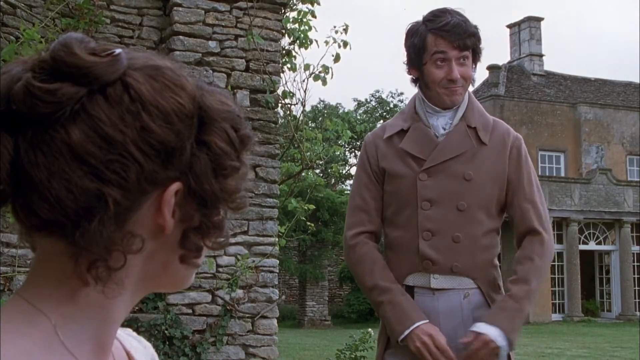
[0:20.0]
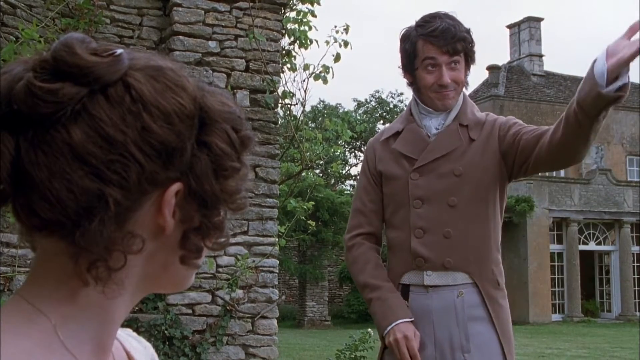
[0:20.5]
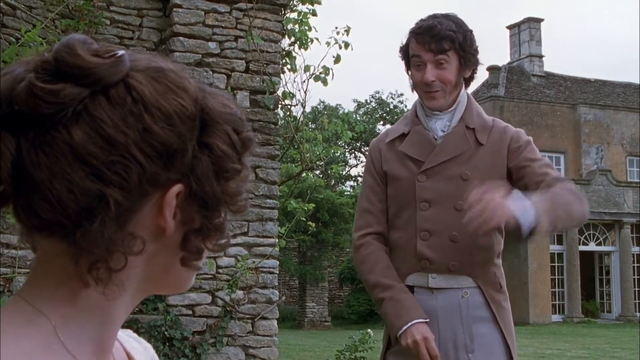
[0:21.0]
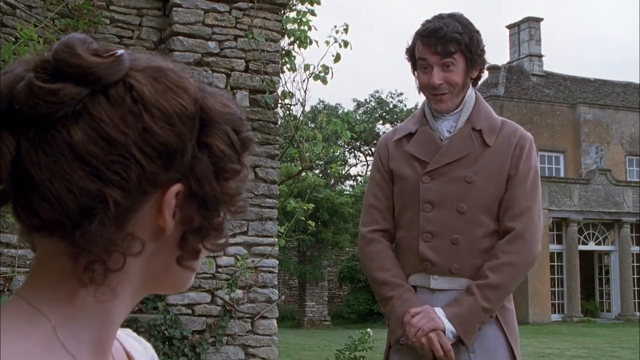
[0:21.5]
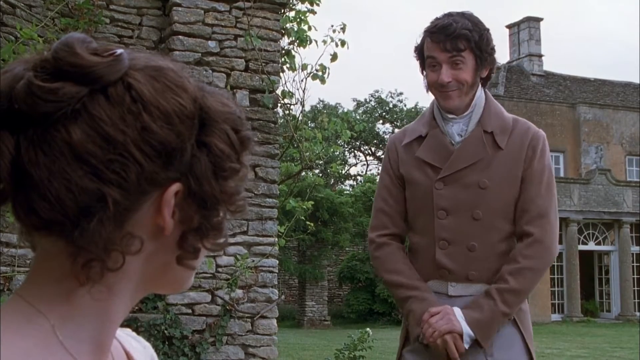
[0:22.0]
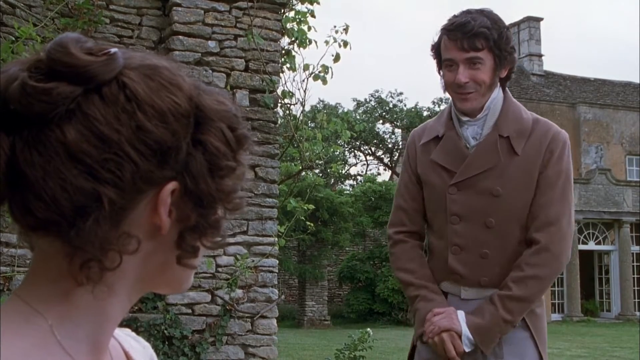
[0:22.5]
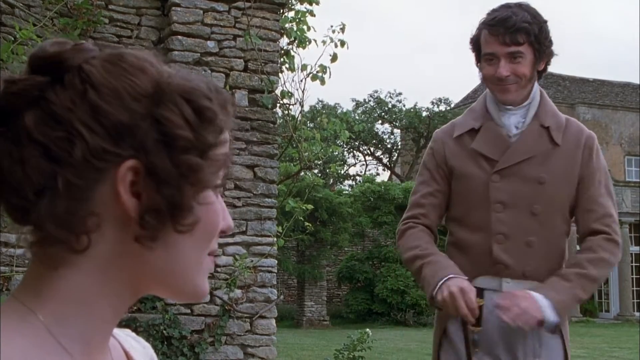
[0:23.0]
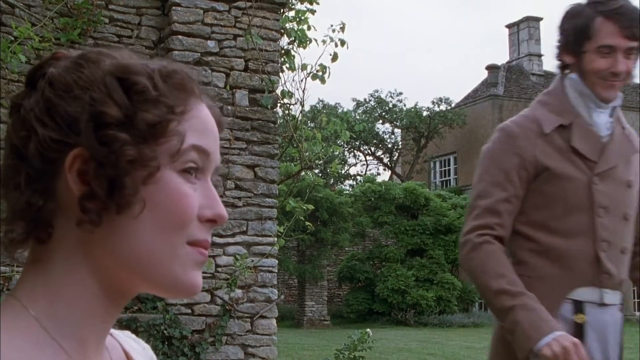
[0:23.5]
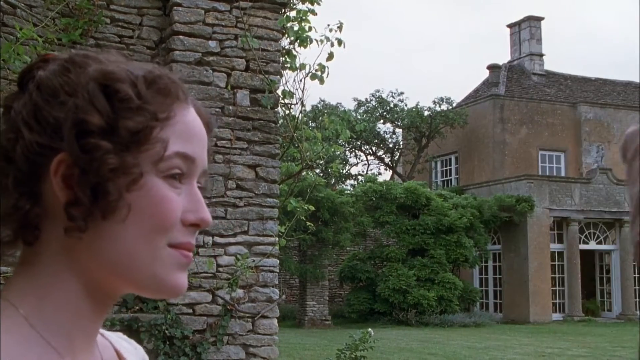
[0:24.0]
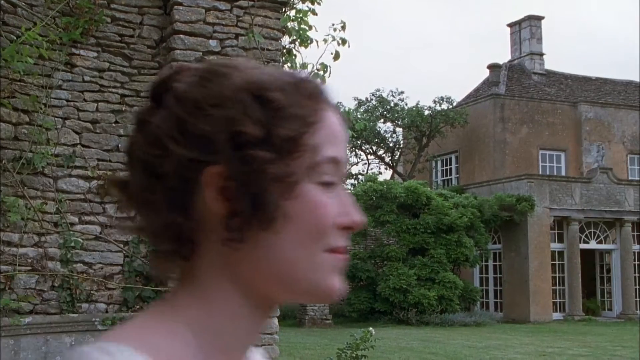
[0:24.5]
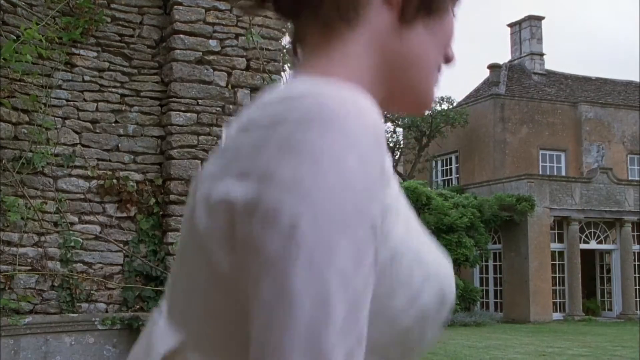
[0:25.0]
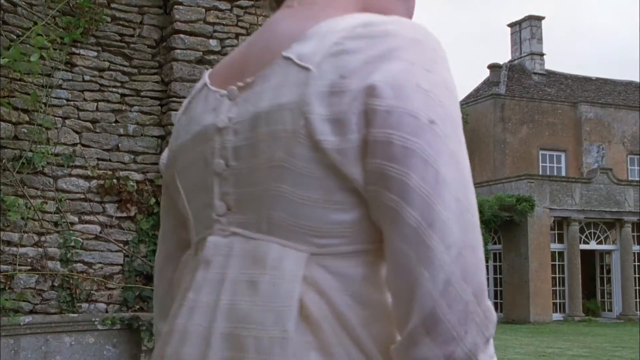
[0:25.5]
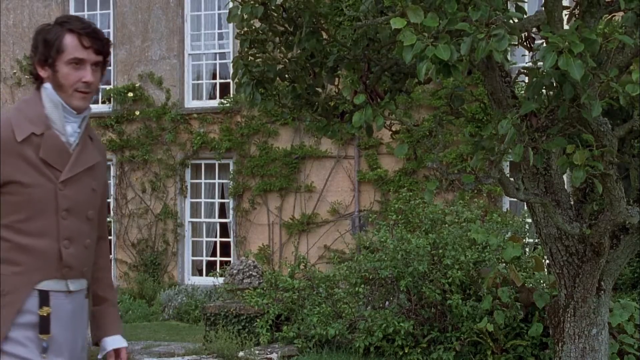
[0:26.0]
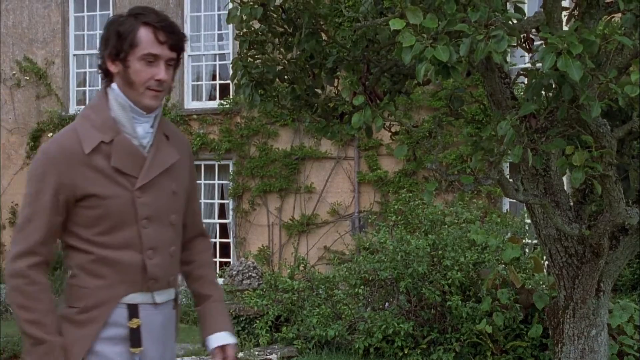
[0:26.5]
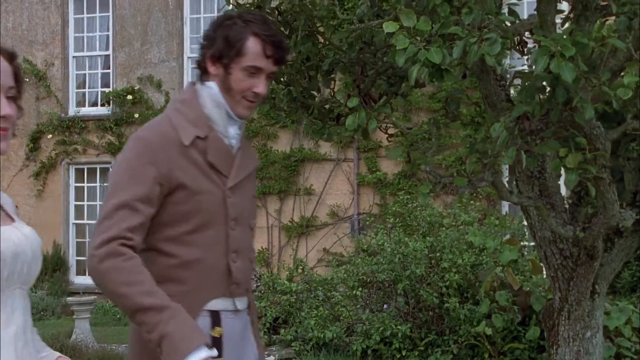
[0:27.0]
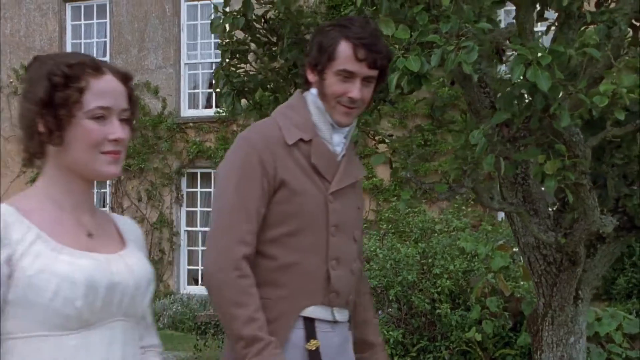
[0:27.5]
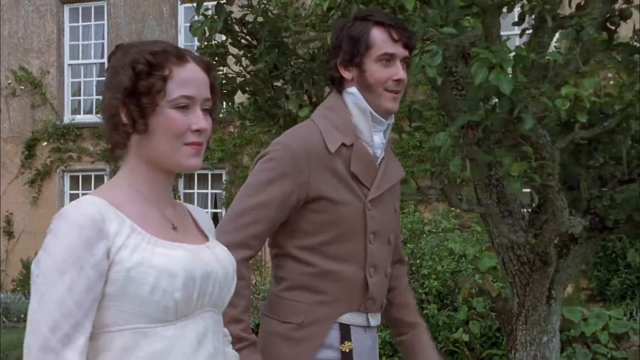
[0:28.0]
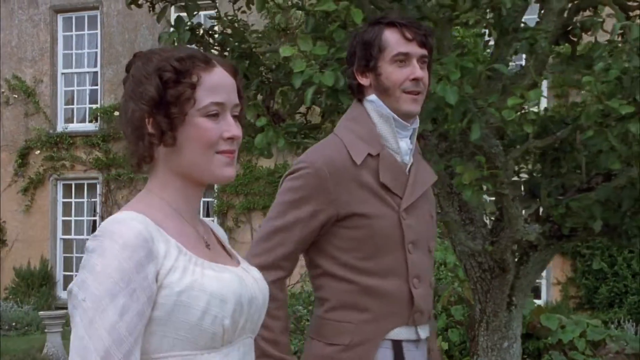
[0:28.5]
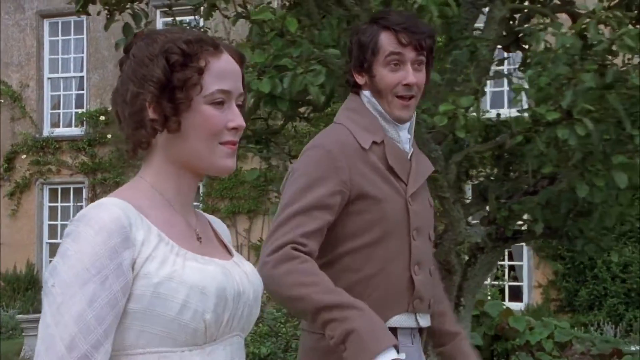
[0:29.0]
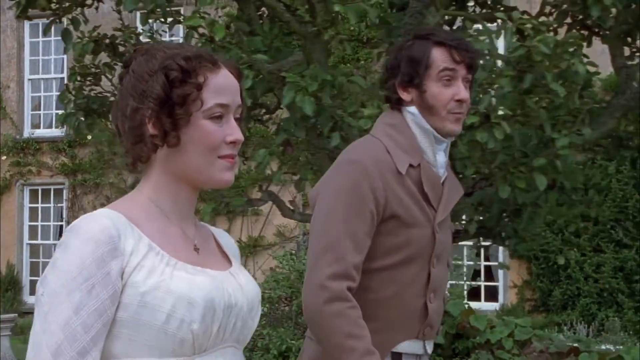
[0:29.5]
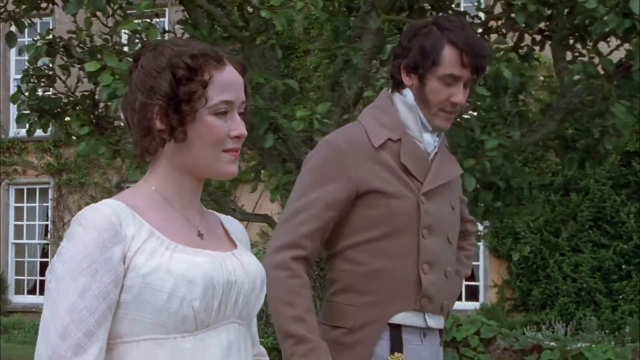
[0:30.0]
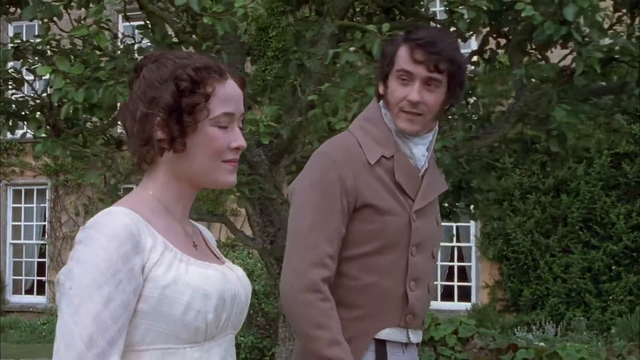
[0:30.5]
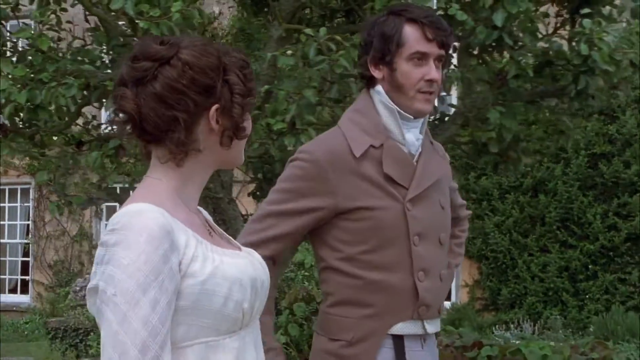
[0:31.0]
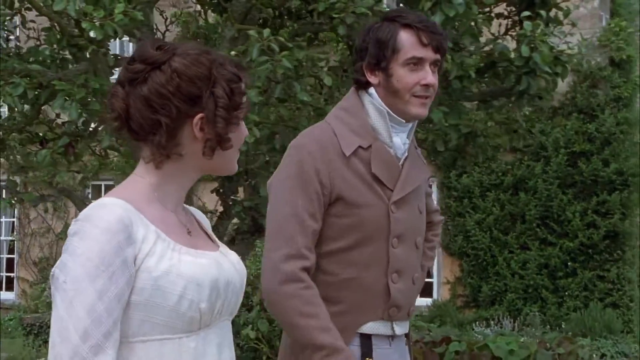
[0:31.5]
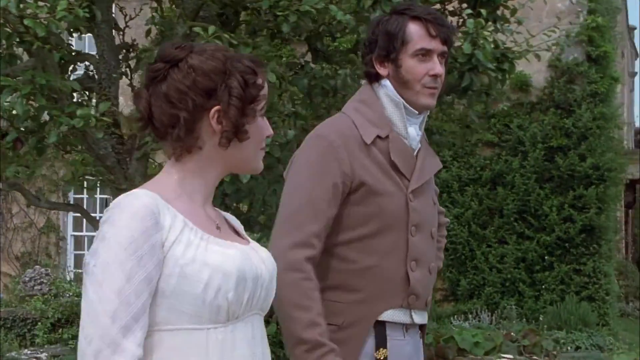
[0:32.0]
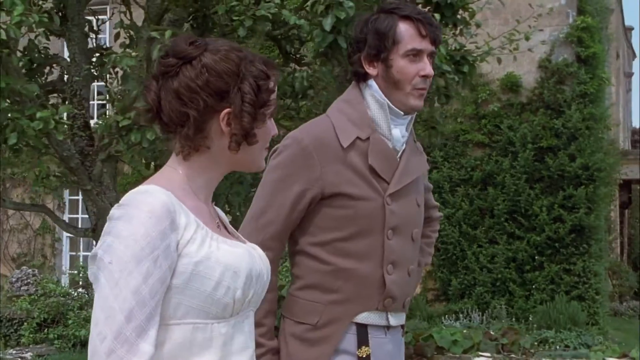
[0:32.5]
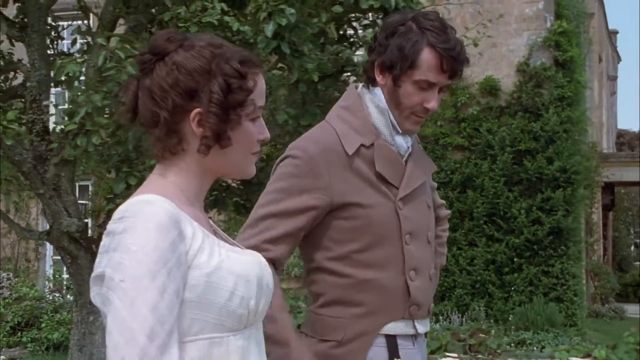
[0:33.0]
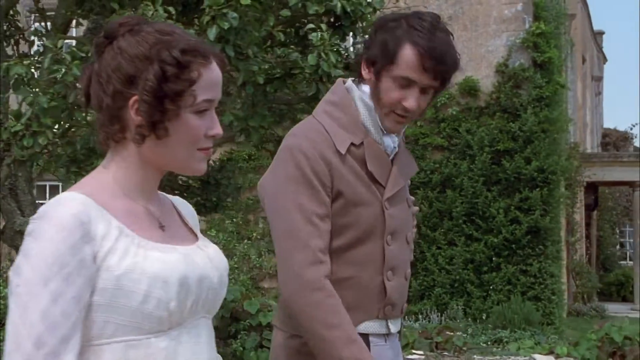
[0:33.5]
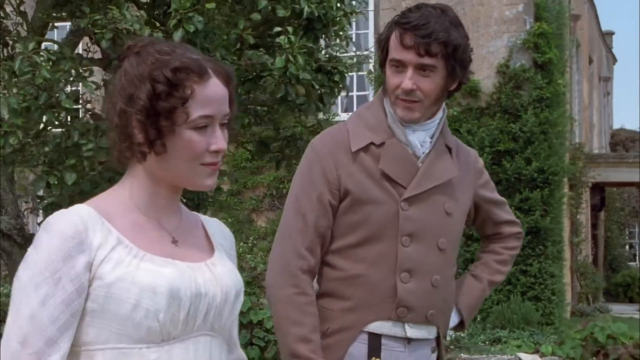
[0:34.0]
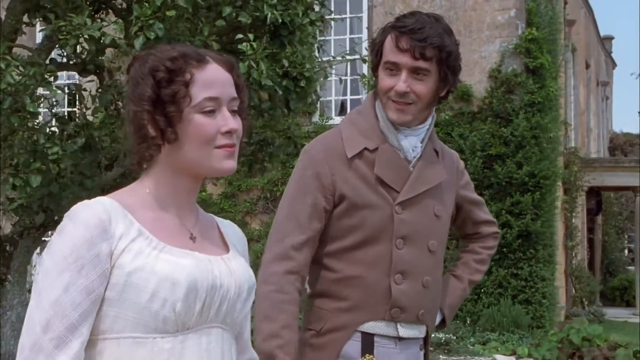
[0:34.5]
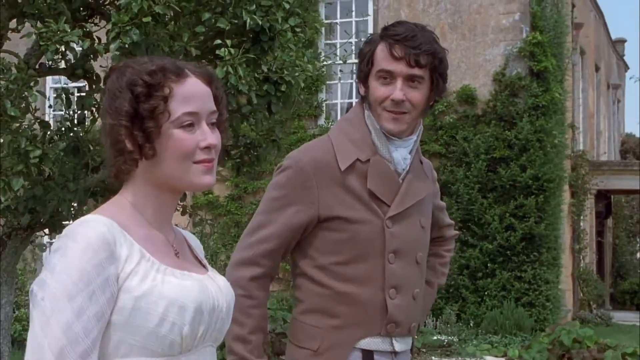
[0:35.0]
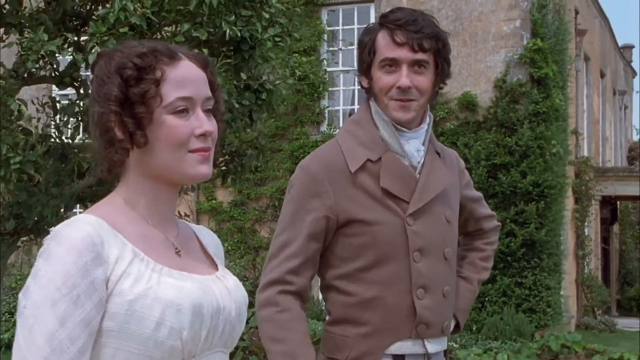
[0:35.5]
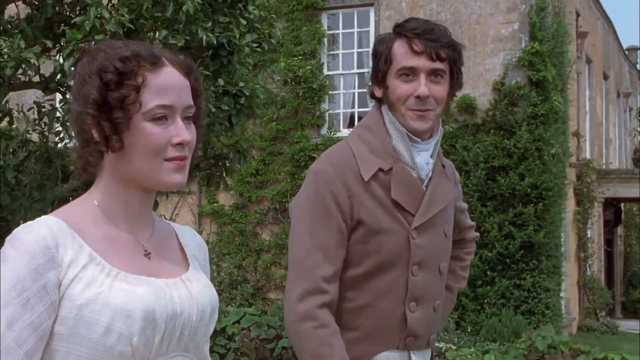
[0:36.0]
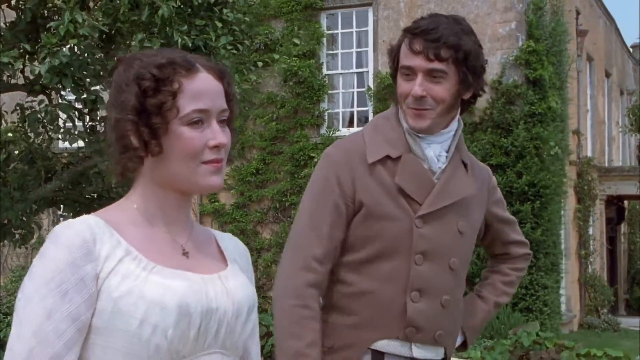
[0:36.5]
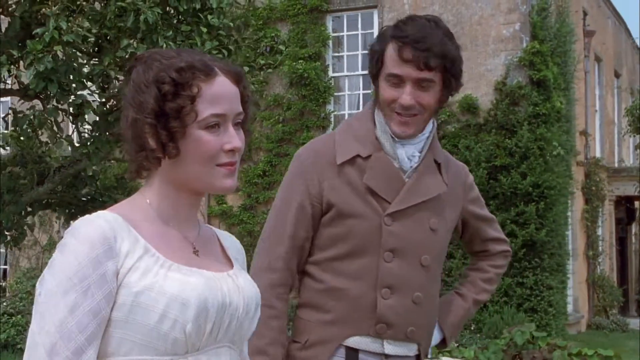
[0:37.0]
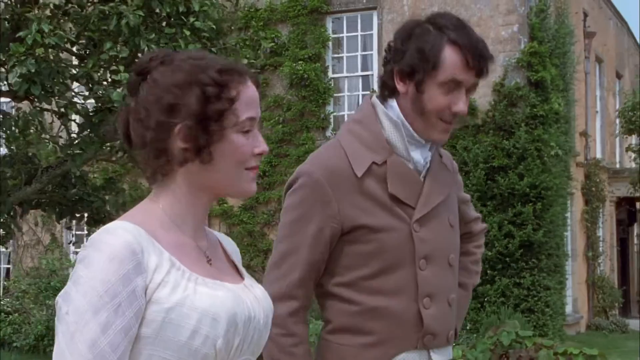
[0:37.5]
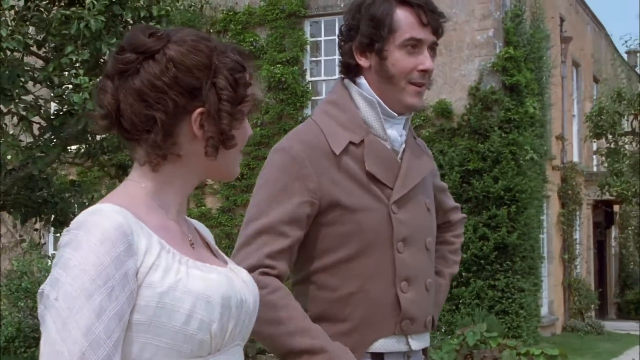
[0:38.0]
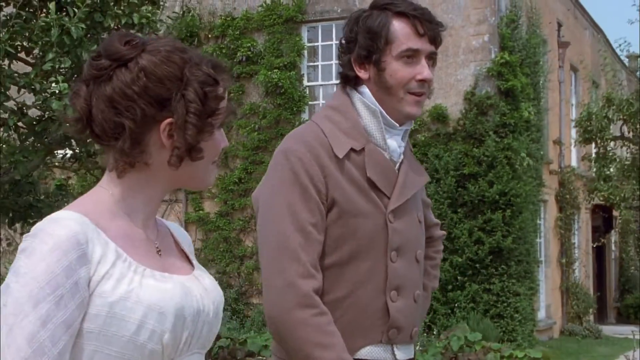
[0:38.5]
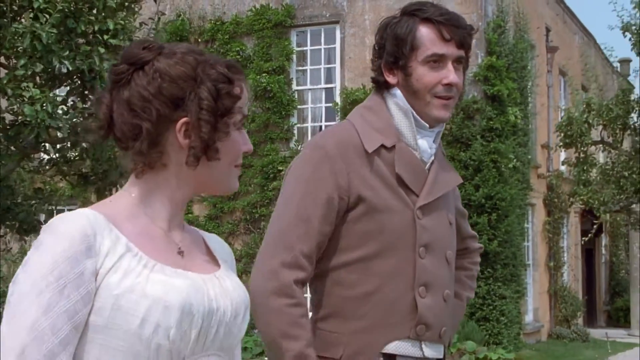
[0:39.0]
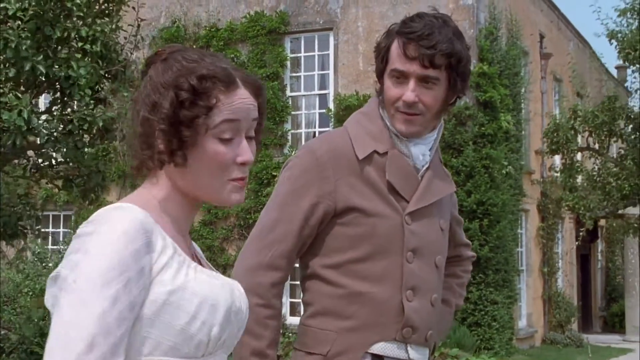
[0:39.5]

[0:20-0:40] The man in the long brown jacket walks closer to the gate, making a funny face, and stretches out a hand as if pointing toward an object, showing the lady something. The surrounding buildings look like ancient buildings. The man walks off while the lady stands up and follows him, and the two walk together through the garden. The man has a walking stick with him. Both are smiling, and they seem to share a close personal relationship.